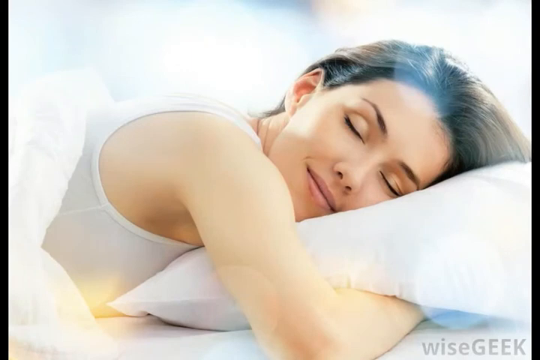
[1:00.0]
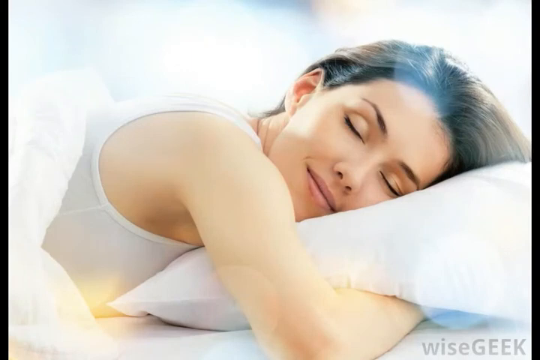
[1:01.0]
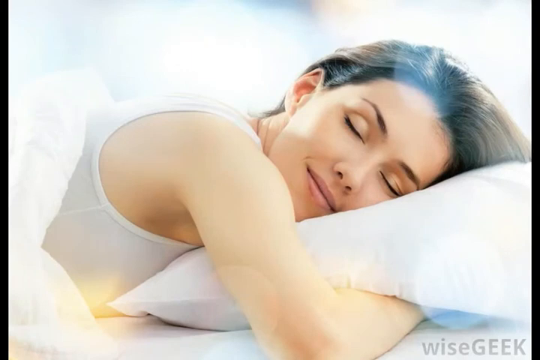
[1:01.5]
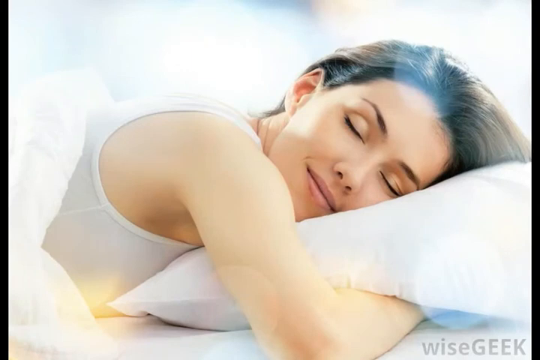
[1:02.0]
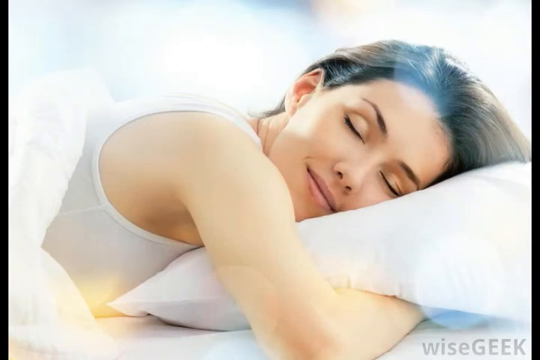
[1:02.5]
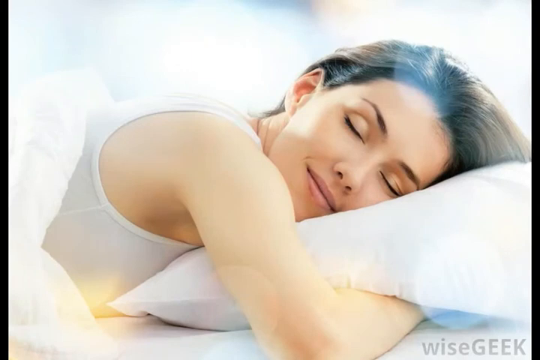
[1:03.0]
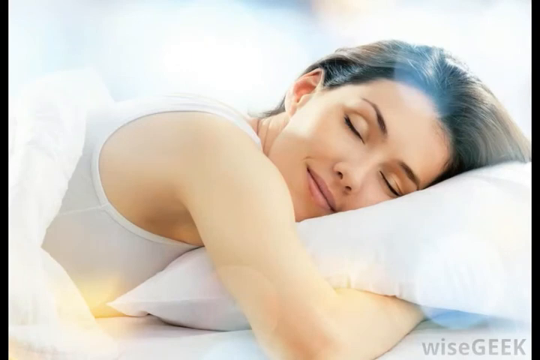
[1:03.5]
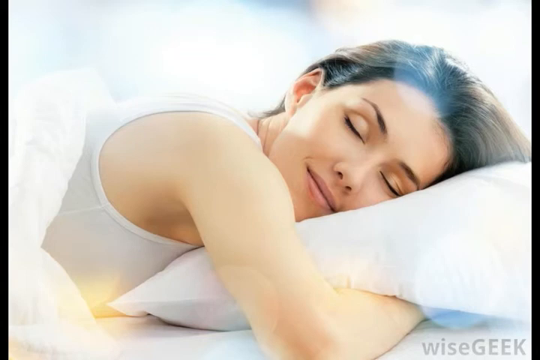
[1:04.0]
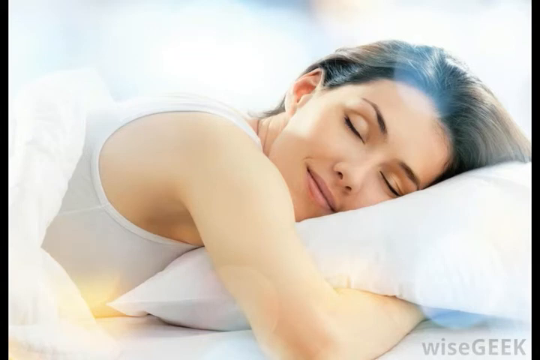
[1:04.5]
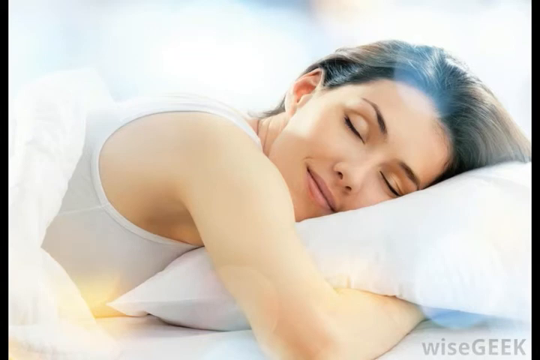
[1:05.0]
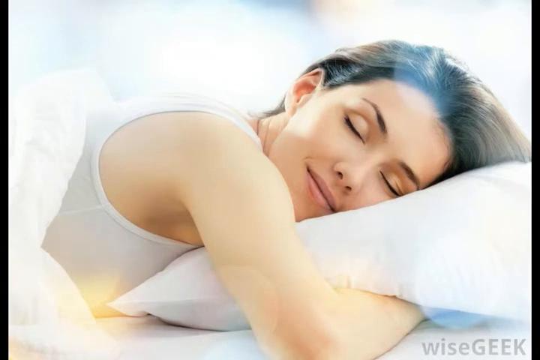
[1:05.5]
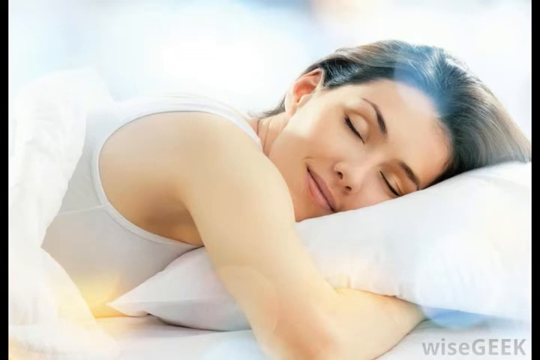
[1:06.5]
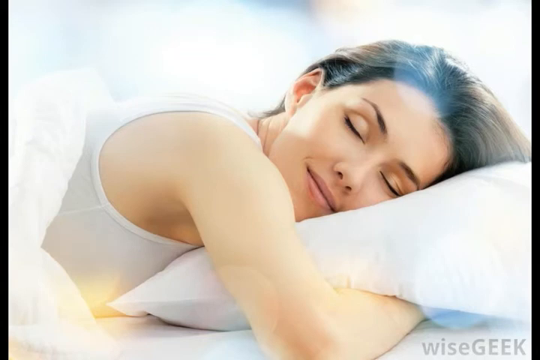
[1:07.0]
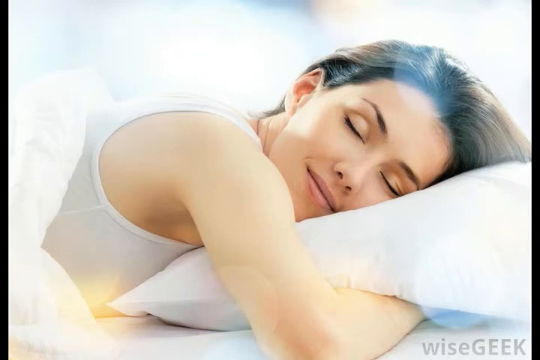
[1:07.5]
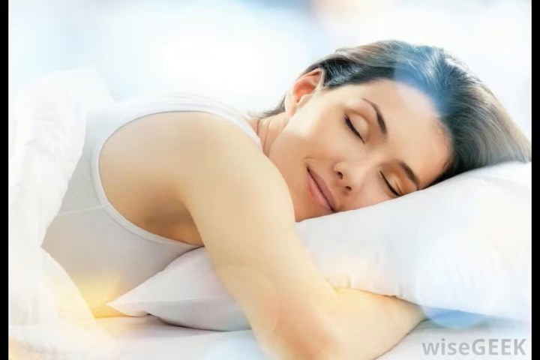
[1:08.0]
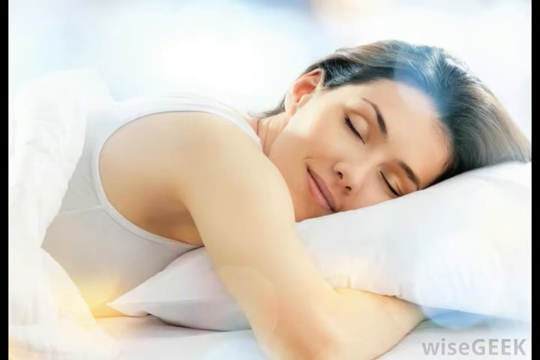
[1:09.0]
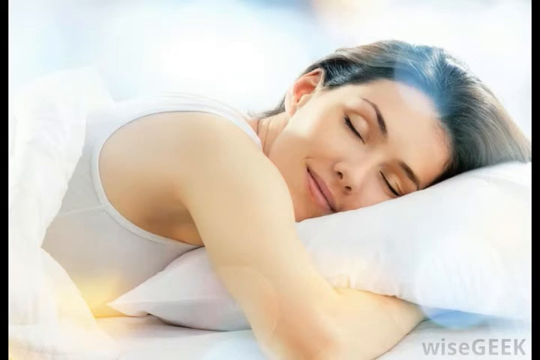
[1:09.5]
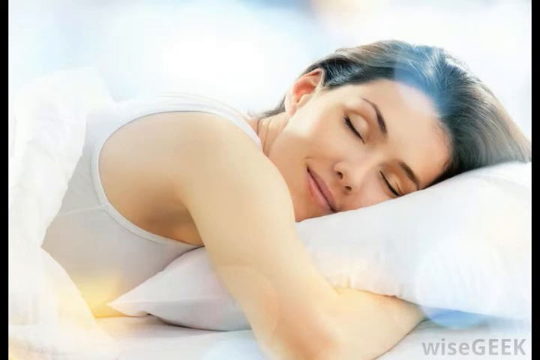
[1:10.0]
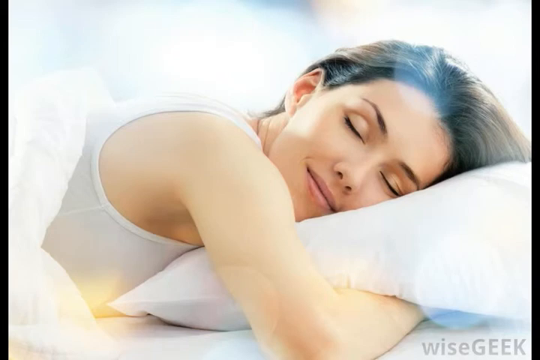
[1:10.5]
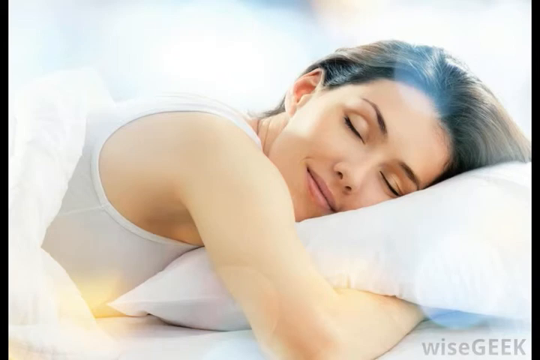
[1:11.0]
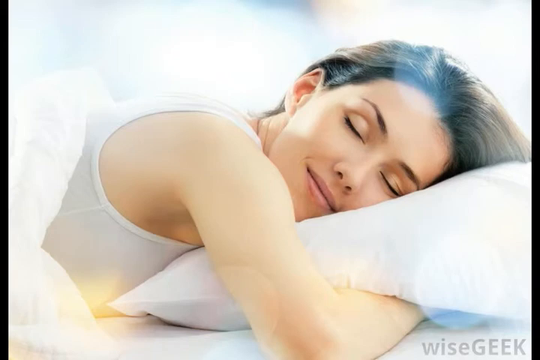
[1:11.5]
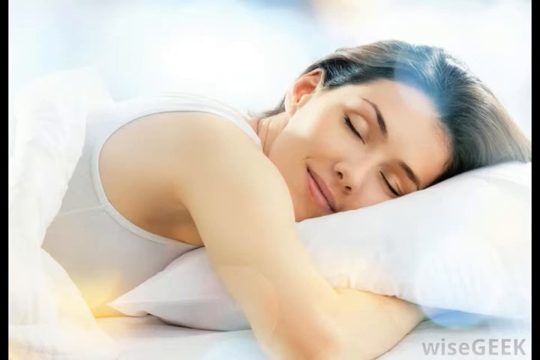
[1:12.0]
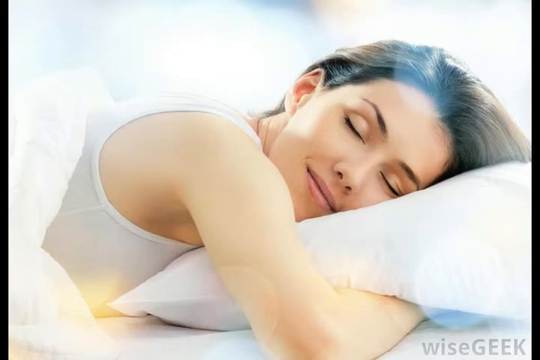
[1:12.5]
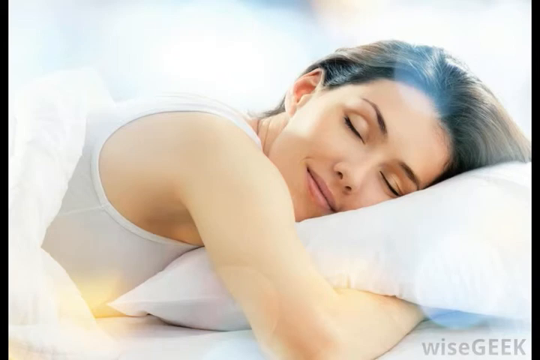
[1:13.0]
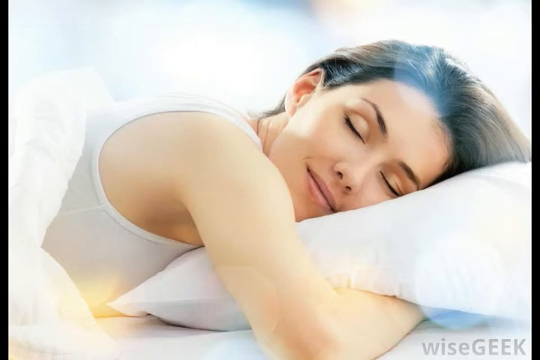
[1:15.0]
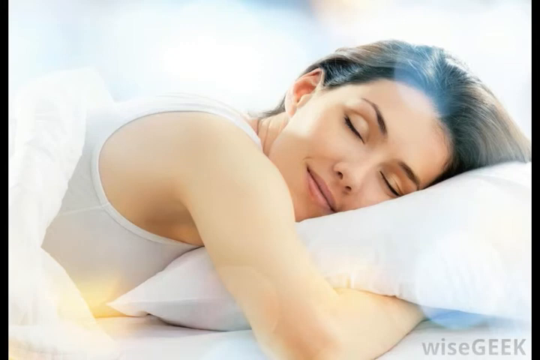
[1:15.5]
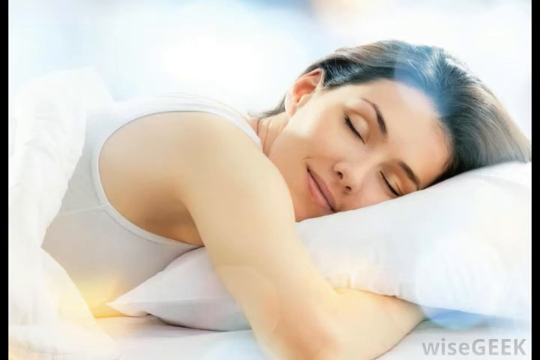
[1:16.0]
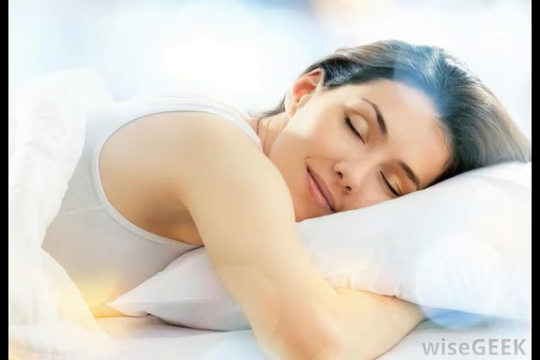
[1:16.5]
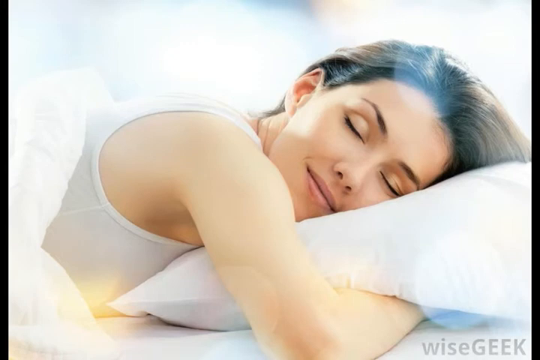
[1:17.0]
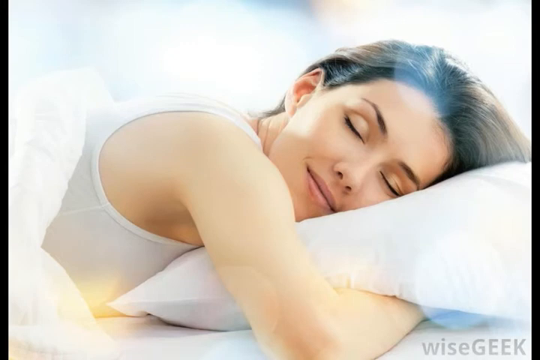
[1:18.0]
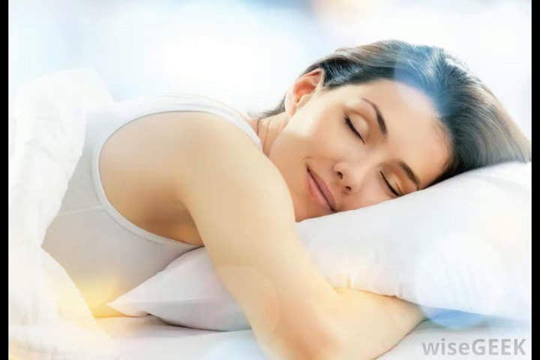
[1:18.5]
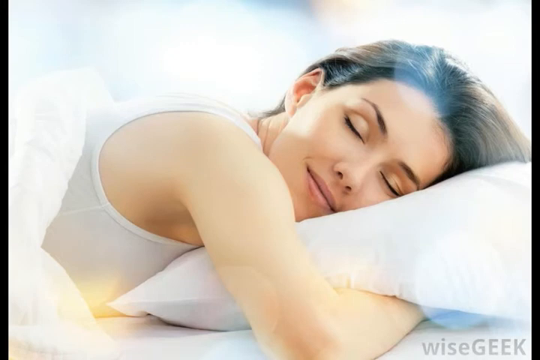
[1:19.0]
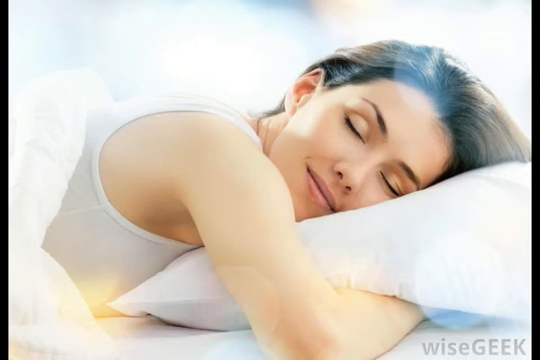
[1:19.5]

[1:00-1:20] A single still shows a reasonably young woman, apparently in her 20s, lying in a bed with one arm hugging a pillow in the foreground. She wears a white tank top, and her brown hair is swept back and rests against the pillow. Her face is clearly in view with a very tranquil, relaxed expression: her eyes are closed, she smiles slightly and she rests her head on the pillow. She appears to be perhaps asleep. A duvet appears to cover part of her body. The background is very softly lit, and the lighting is soft and almost heavenly.